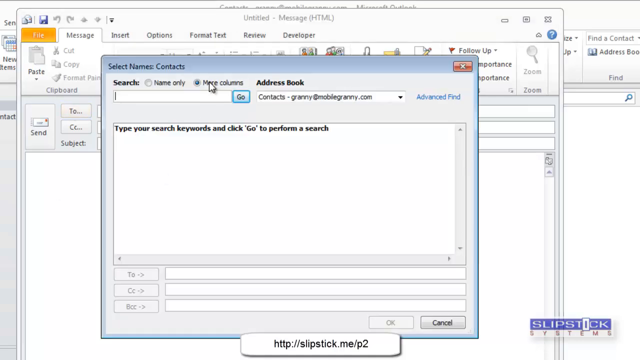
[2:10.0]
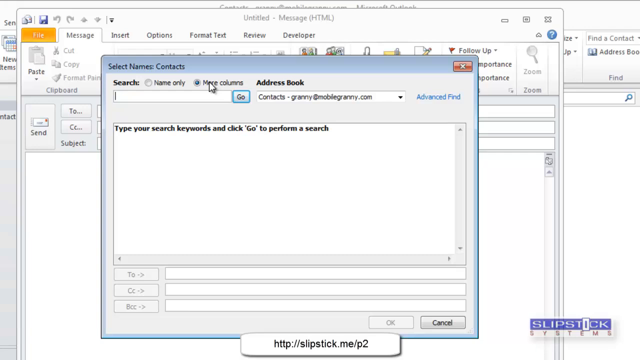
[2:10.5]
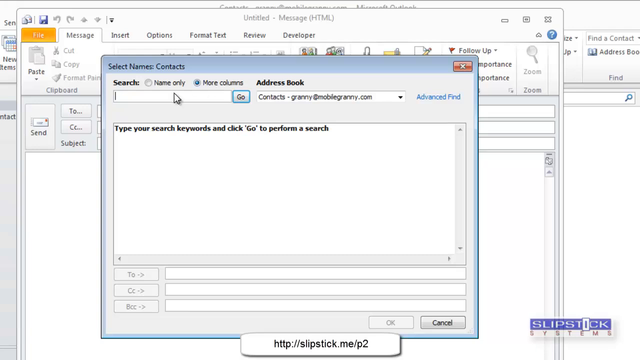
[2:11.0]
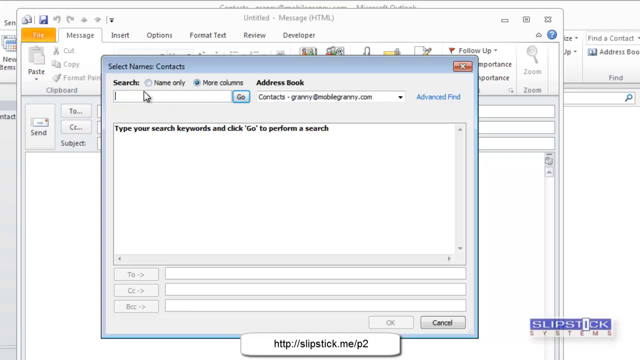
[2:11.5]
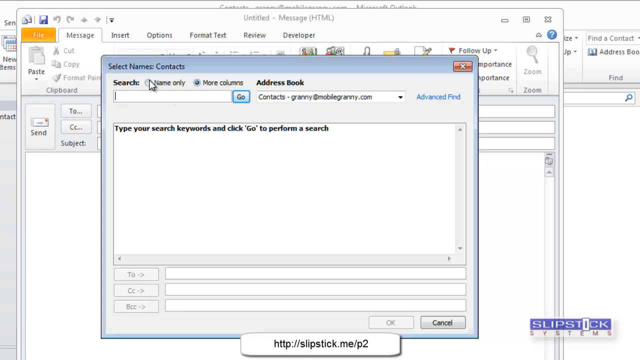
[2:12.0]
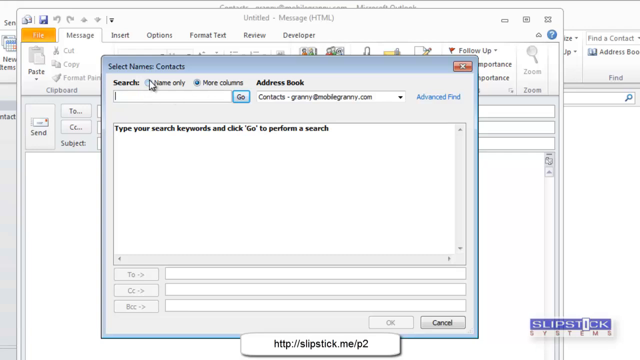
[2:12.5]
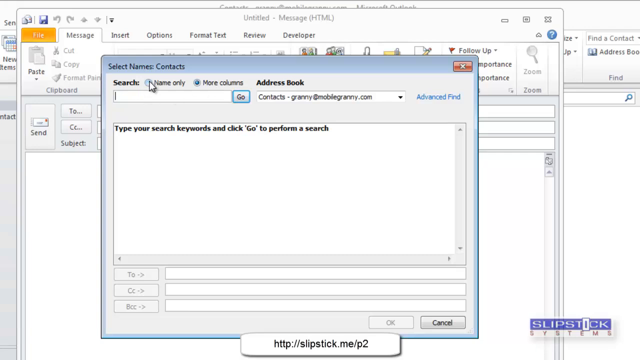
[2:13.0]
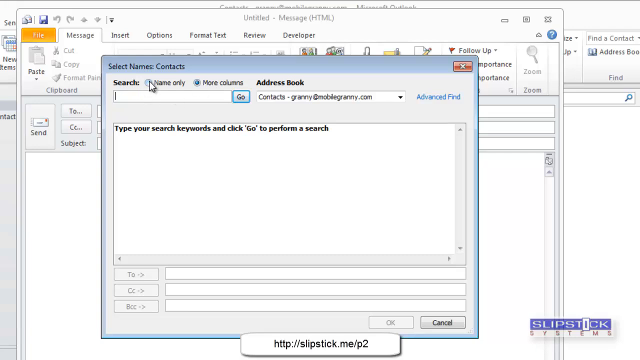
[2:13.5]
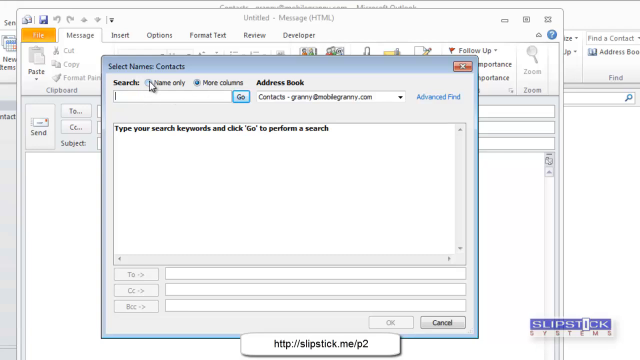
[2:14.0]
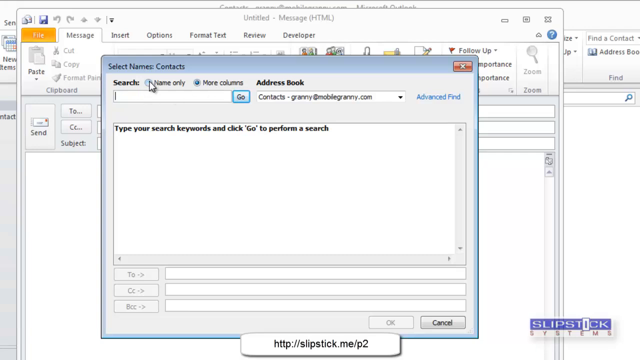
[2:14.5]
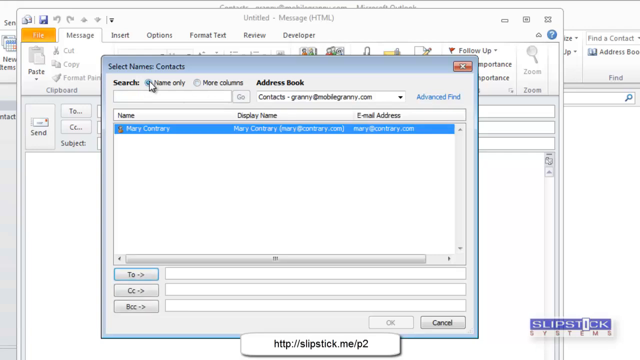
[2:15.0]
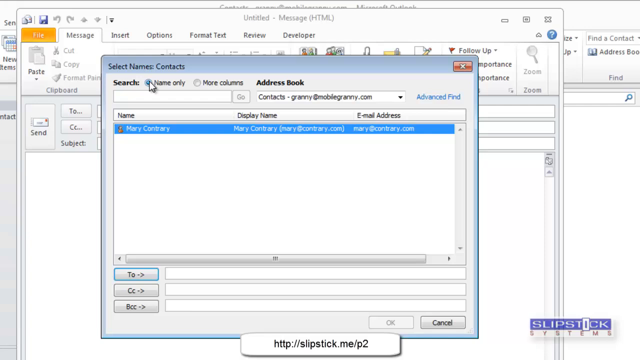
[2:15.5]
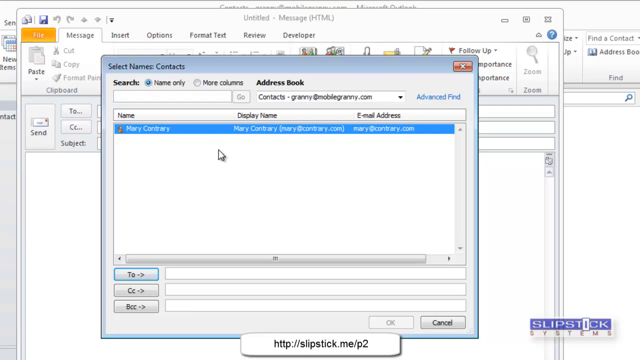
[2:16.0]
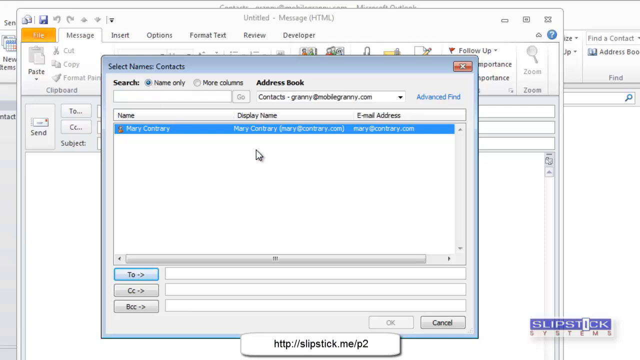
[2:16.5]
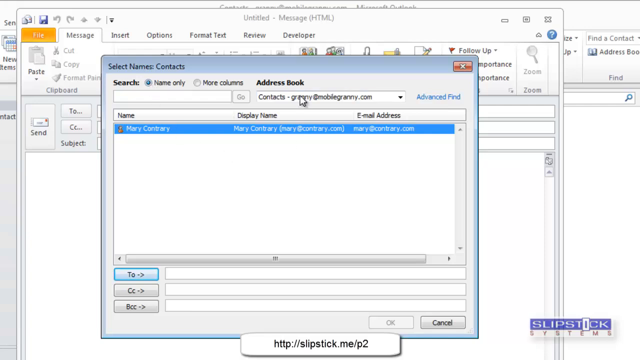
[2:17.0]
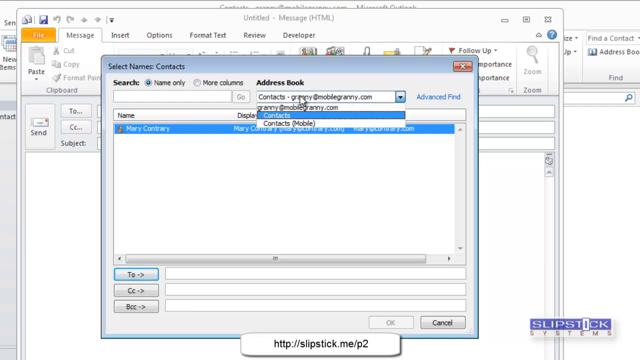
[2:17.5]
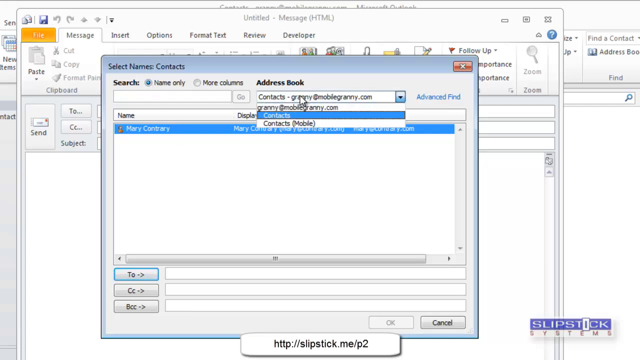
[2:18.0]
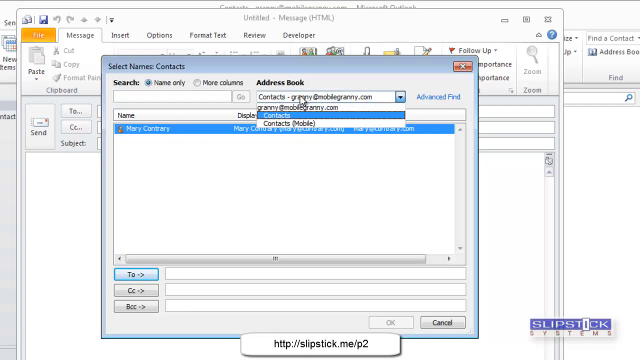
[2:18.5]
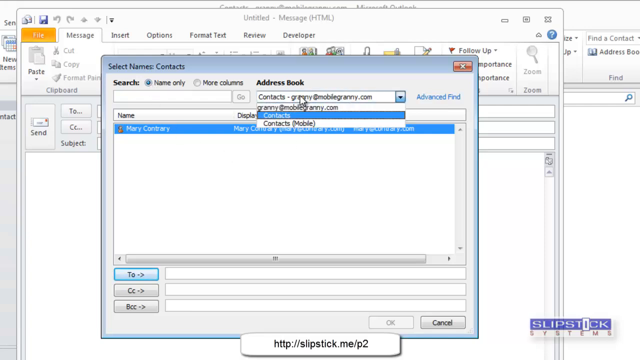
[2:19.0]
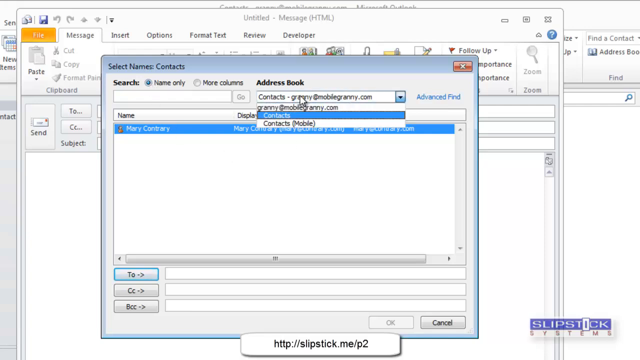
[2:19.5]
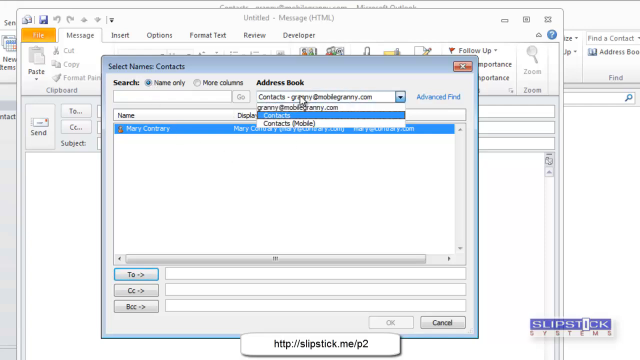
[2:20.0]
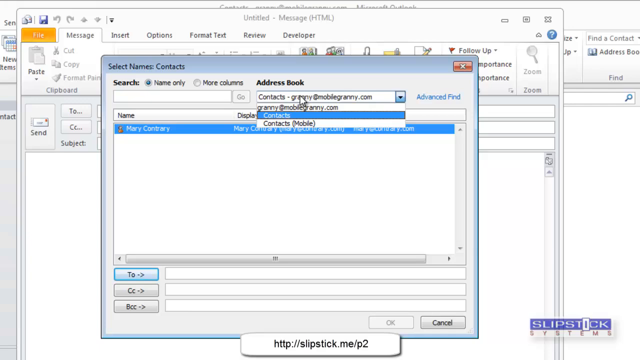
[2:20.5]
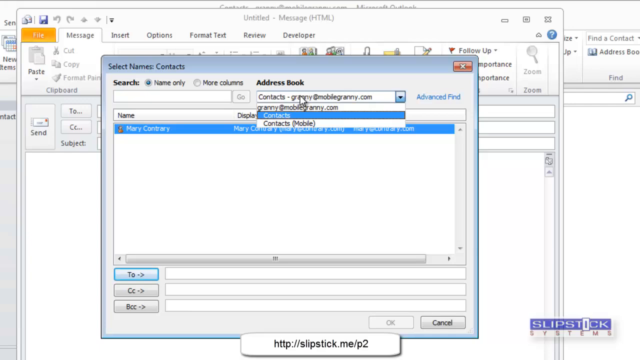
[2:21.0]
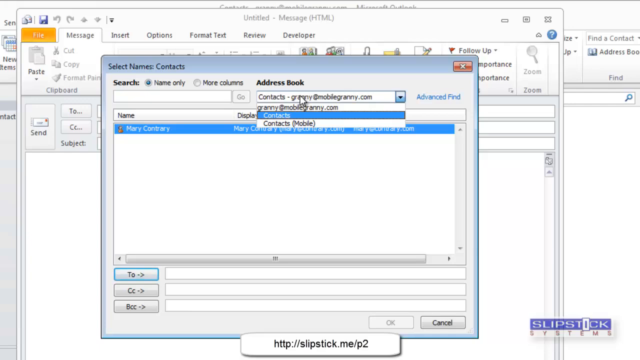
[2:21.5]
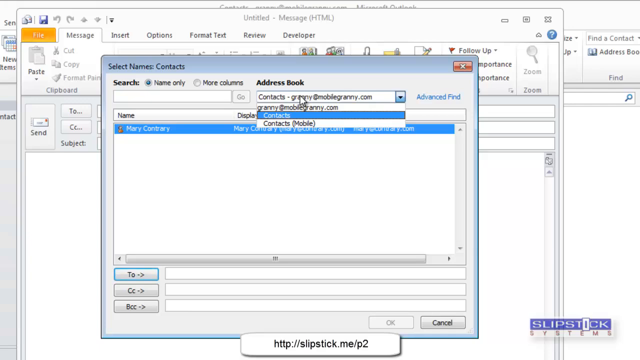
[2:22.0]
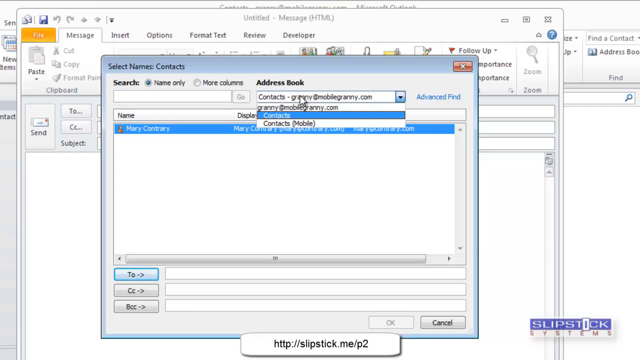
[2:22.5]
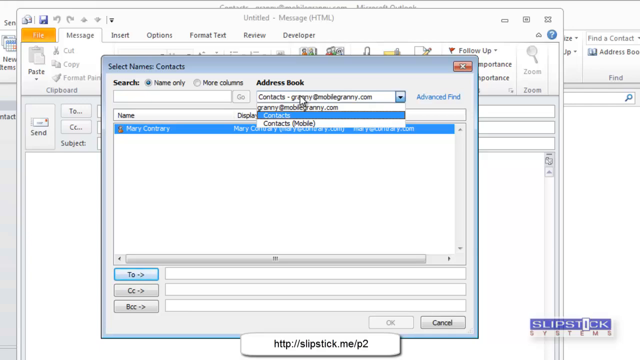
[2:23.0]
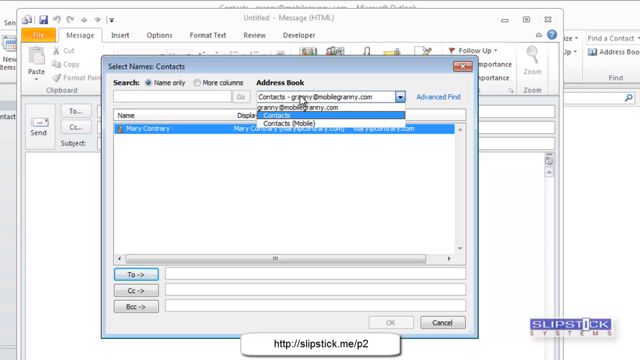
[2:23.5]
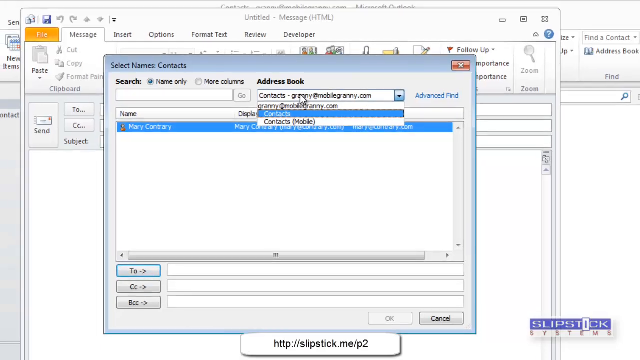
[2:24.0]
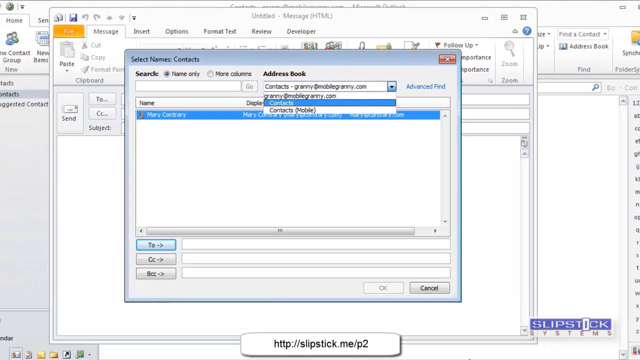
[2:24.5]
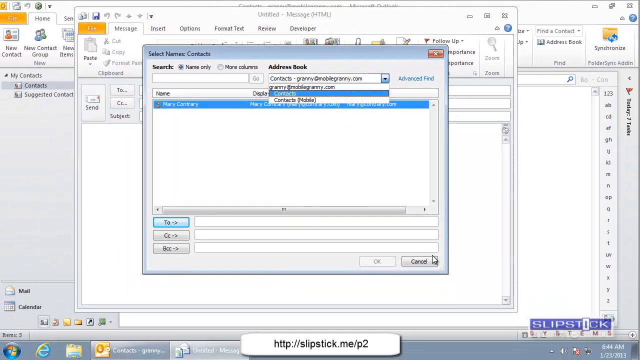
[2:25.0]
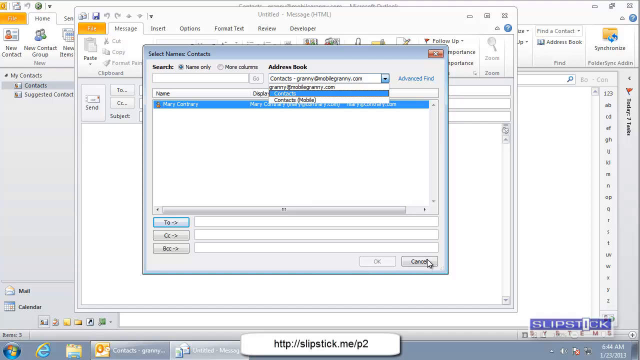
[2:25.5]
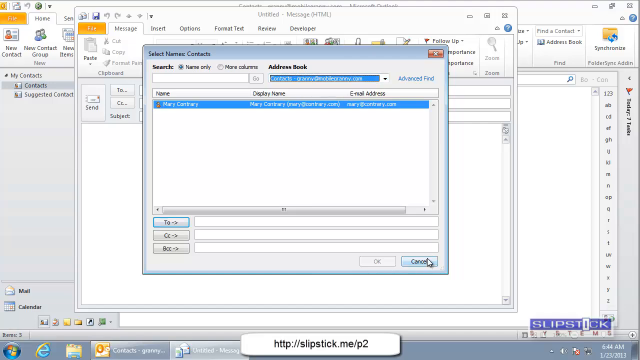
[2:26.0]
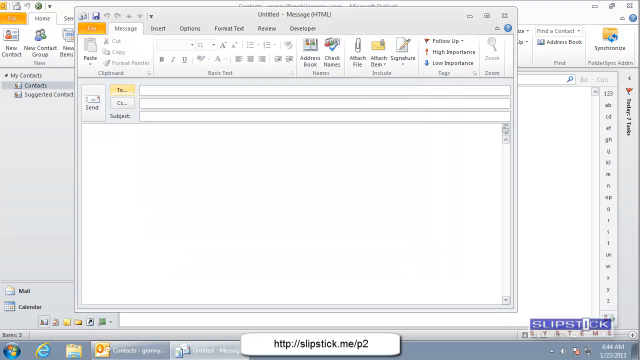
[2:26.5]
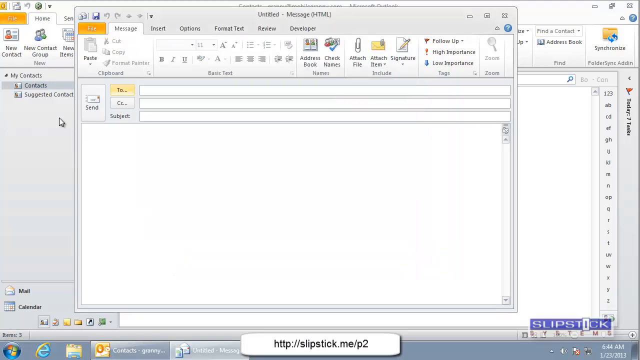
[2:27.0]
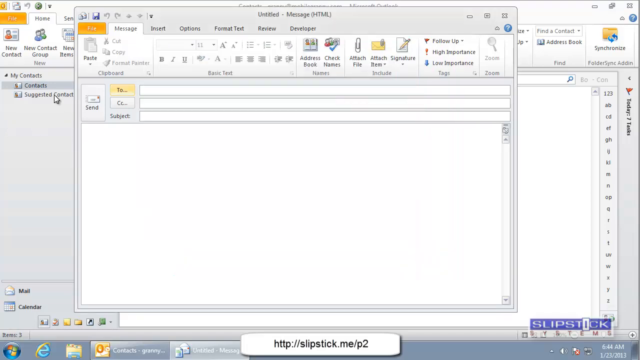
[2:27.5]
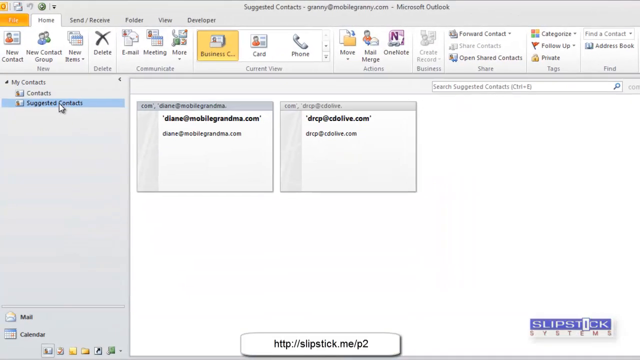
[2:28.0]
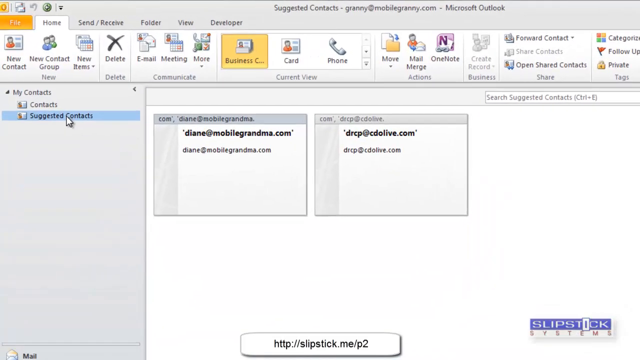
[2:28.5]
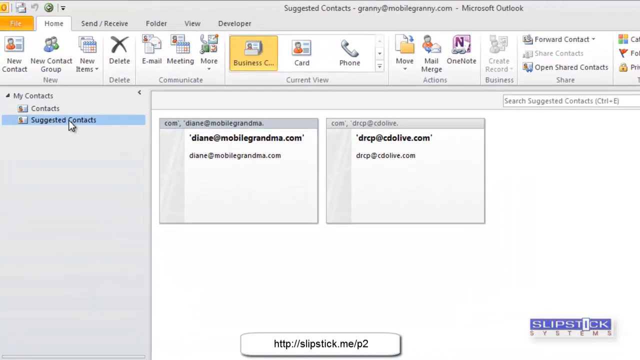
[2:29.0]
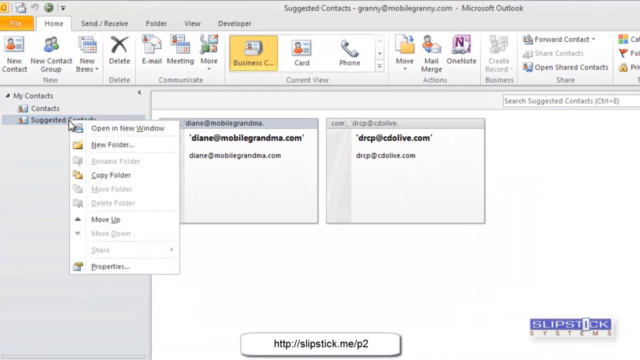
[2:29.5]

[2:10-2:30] The user still seems to be trying to select contacts. The Select Names: Contacts window is open, with Search options at the top to search by Name Only or More Columns, the address book, and a window that says "type your search keywords and click Go to perform a search." They select the Name Only option, and underneath, Mary Contrary pops up with the name, display name and email address. They apparently go back to Contacts again, then cancel and close the window and go back to Suggested Contacts. They keep bouncing around, looking at the same contact, closing it, opening it back up, going to Suggested Contacts and opening Contacts again, without selecting or accomplishing anything.